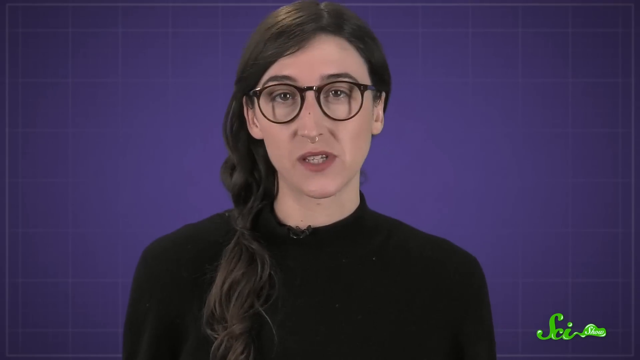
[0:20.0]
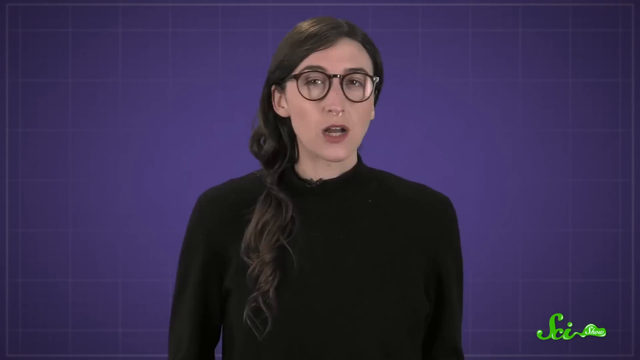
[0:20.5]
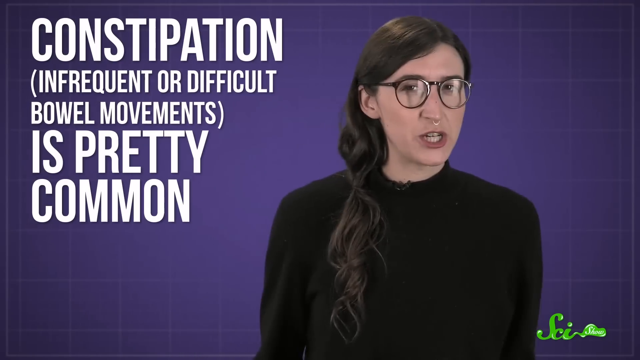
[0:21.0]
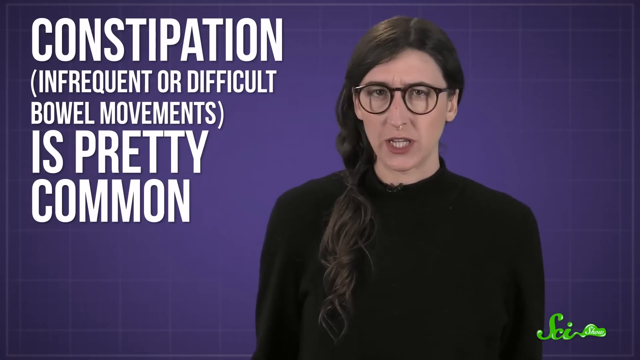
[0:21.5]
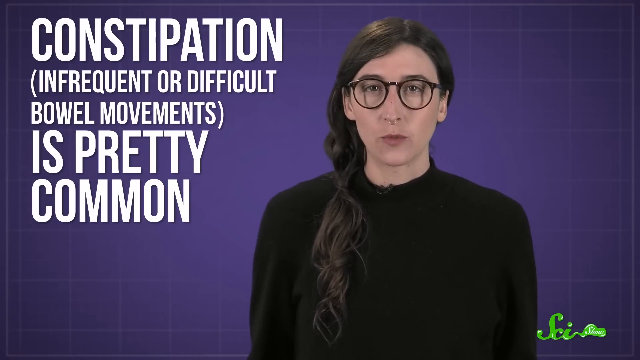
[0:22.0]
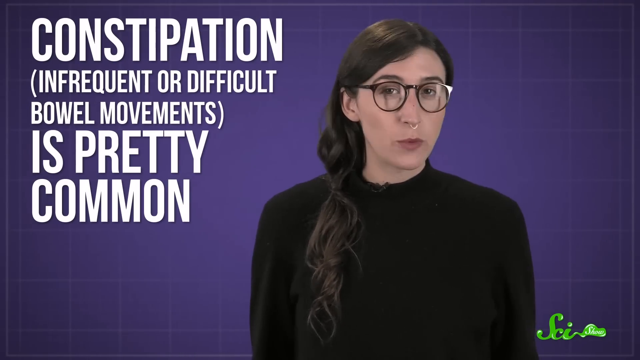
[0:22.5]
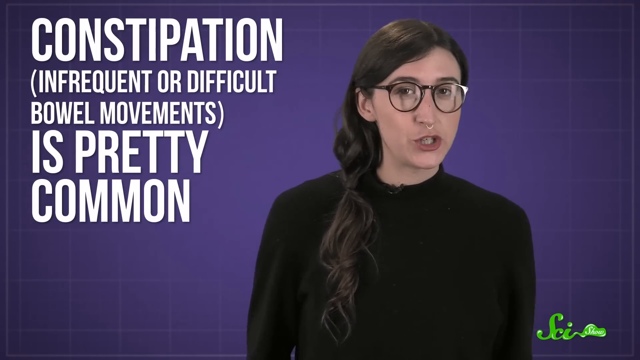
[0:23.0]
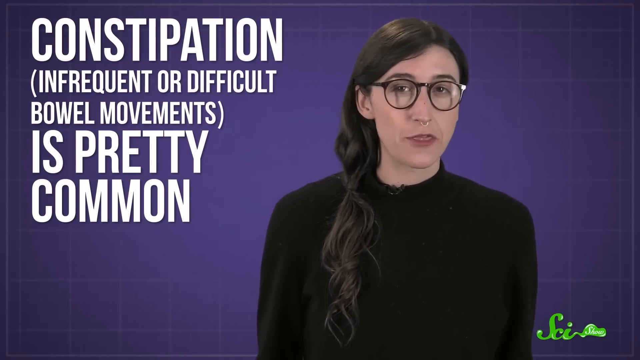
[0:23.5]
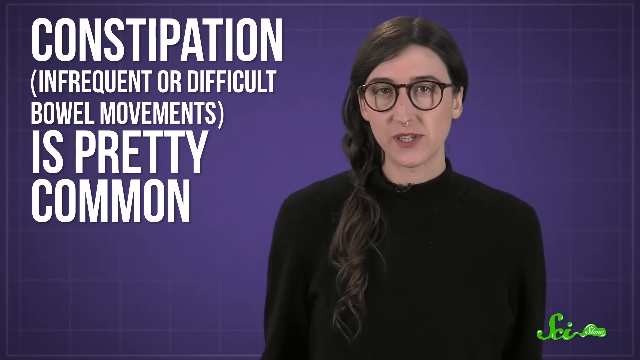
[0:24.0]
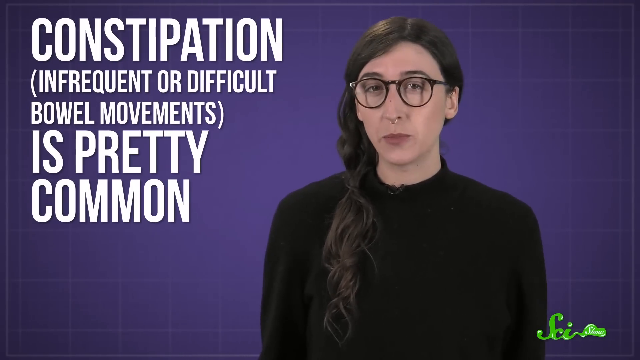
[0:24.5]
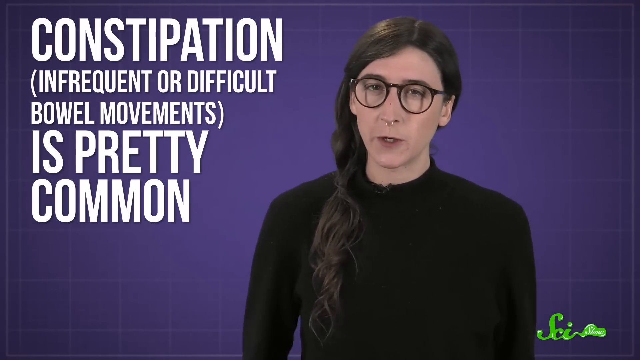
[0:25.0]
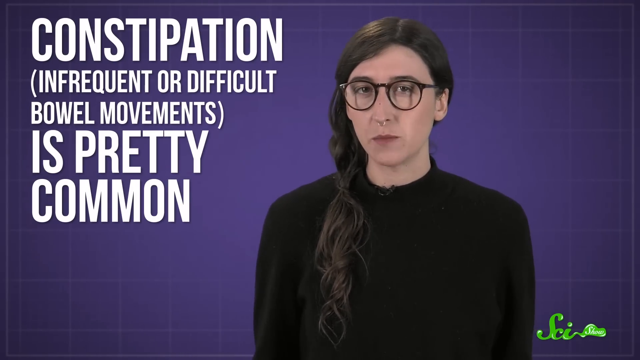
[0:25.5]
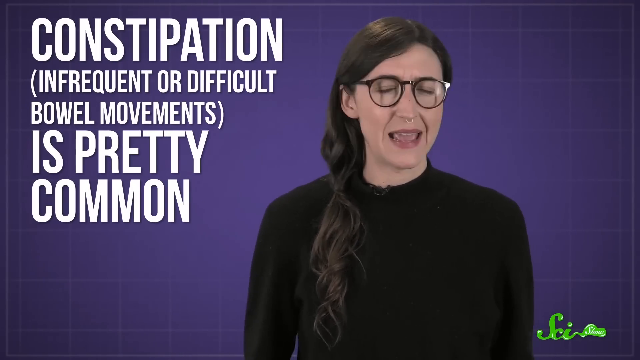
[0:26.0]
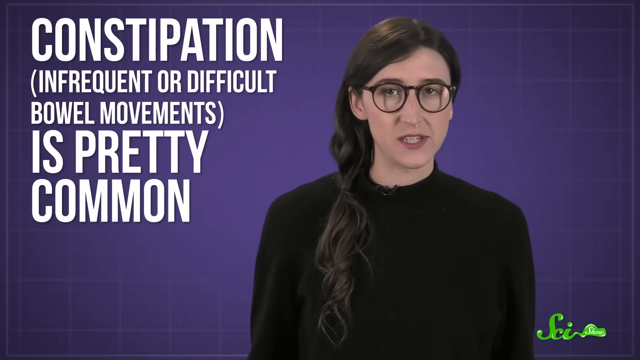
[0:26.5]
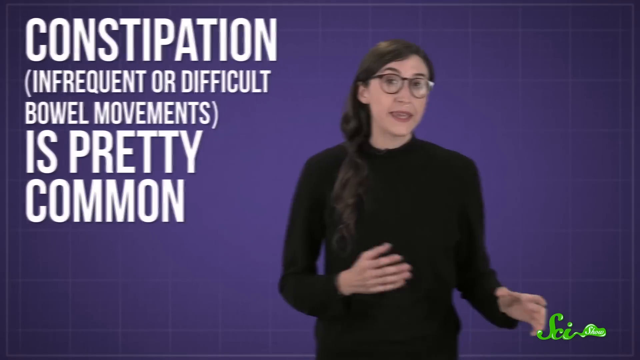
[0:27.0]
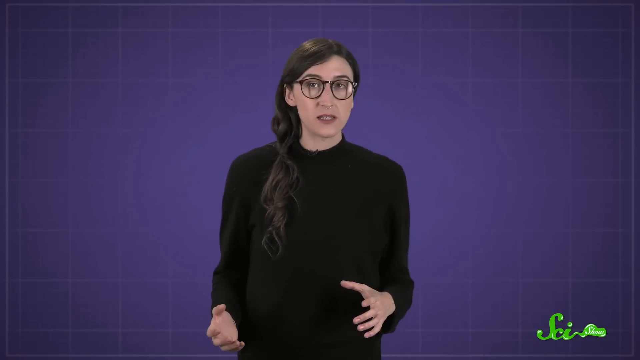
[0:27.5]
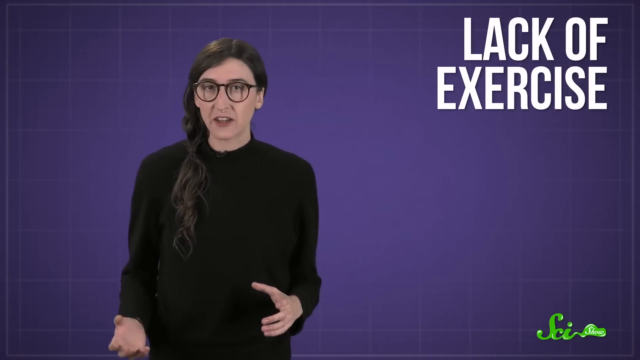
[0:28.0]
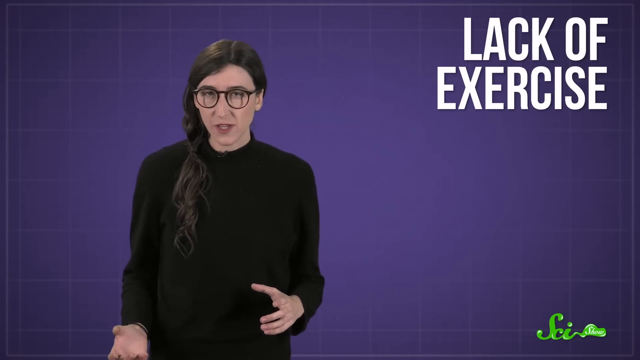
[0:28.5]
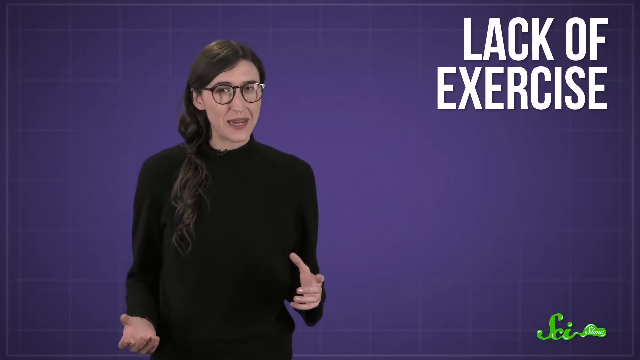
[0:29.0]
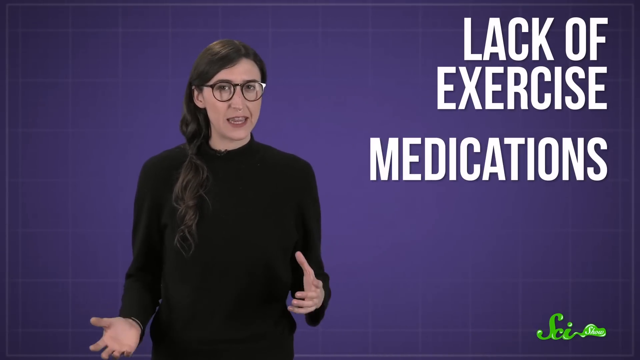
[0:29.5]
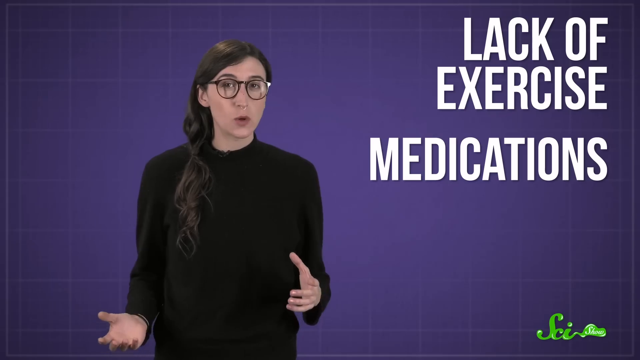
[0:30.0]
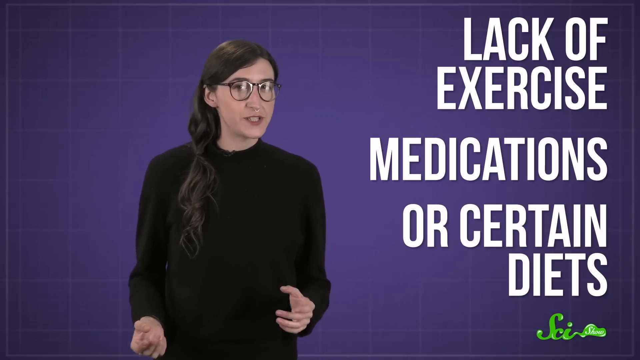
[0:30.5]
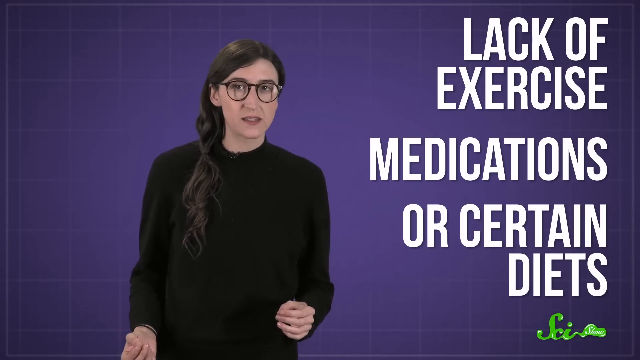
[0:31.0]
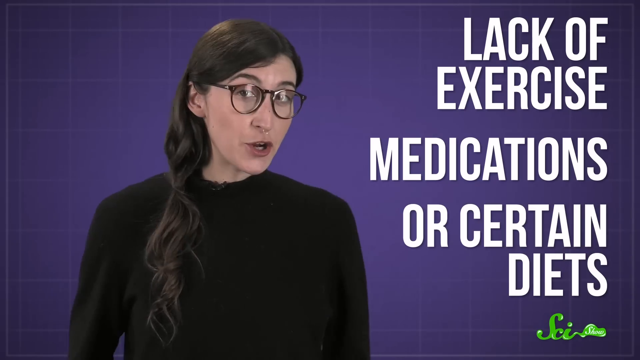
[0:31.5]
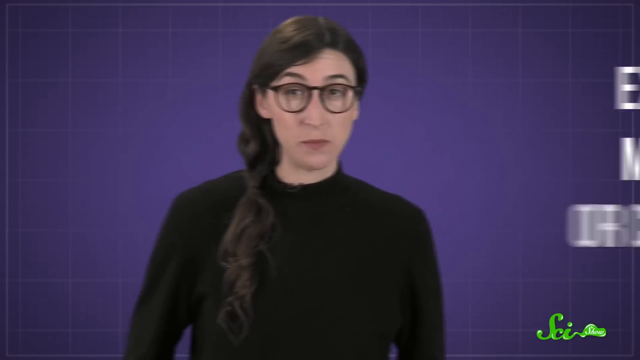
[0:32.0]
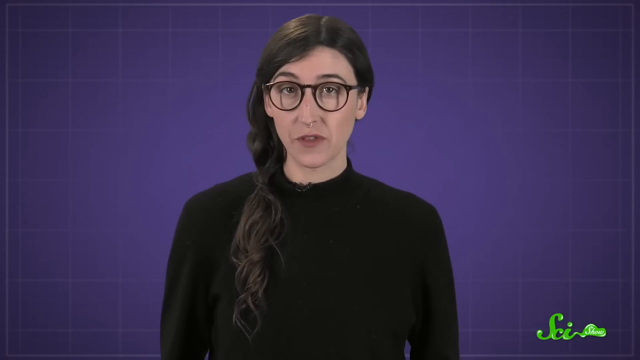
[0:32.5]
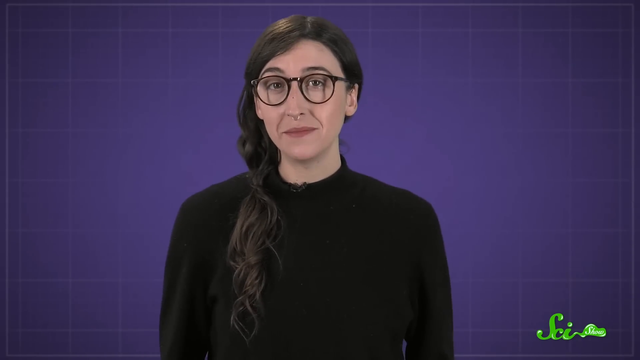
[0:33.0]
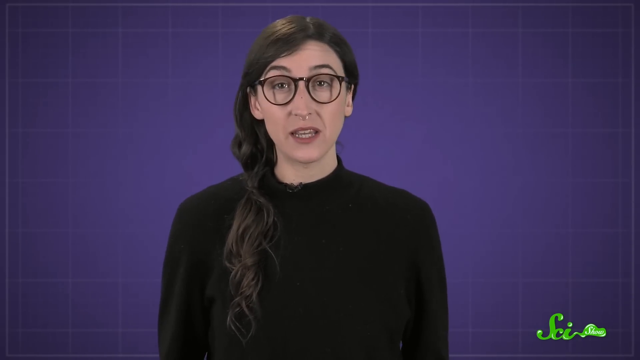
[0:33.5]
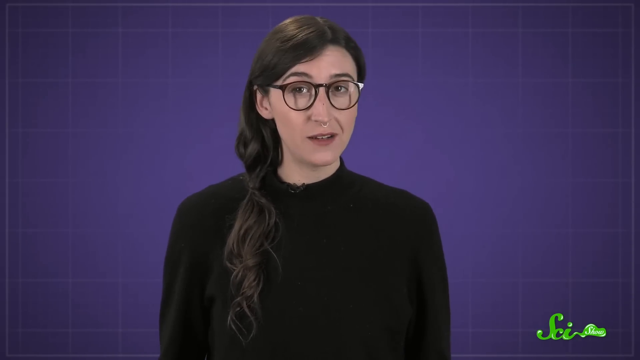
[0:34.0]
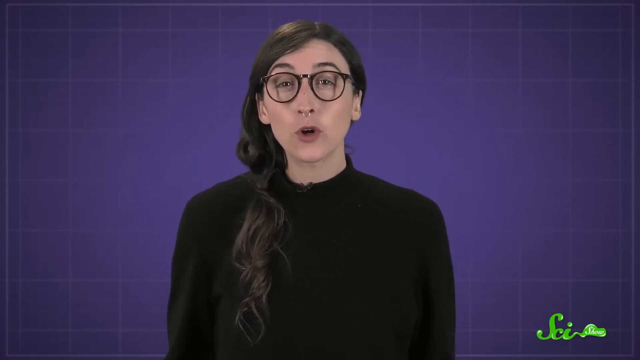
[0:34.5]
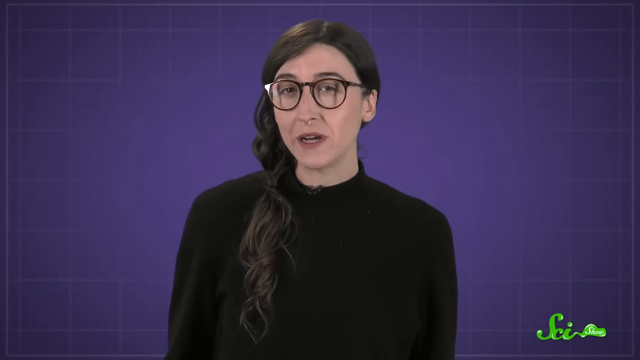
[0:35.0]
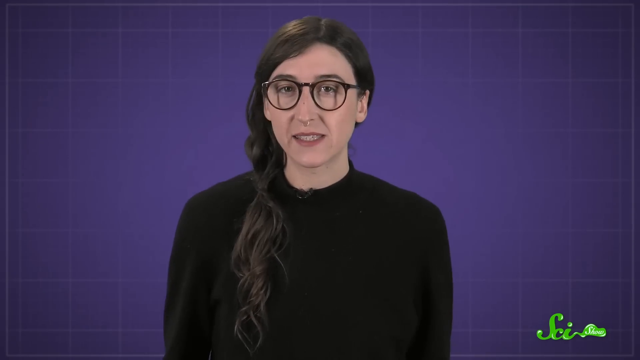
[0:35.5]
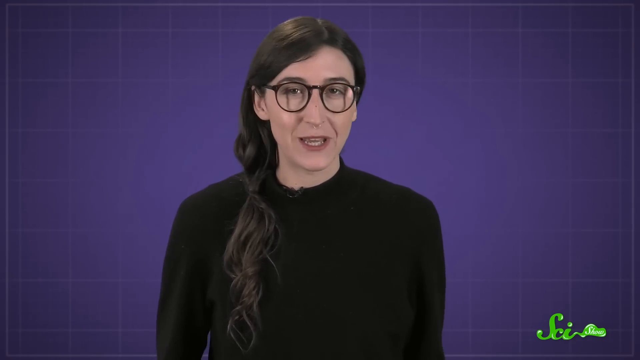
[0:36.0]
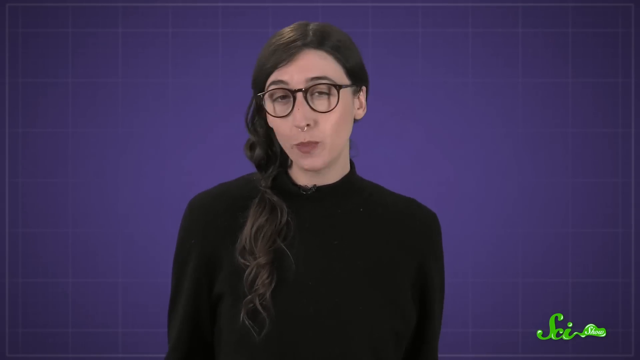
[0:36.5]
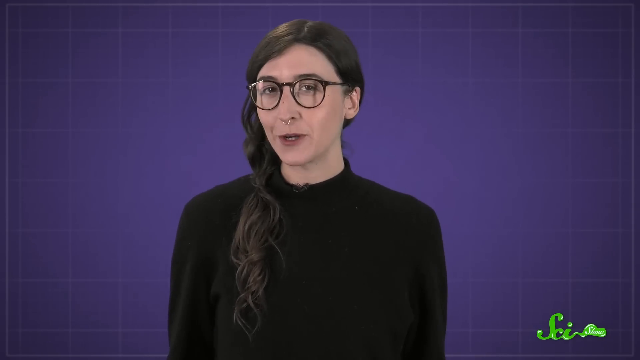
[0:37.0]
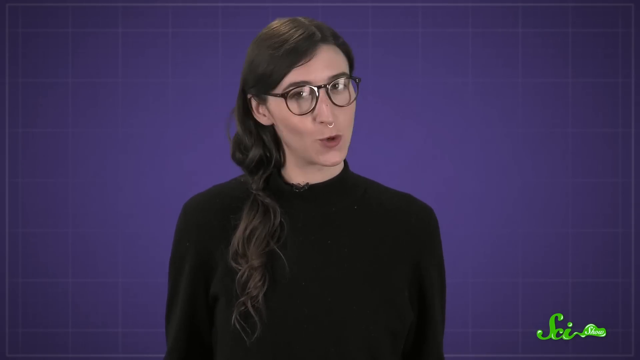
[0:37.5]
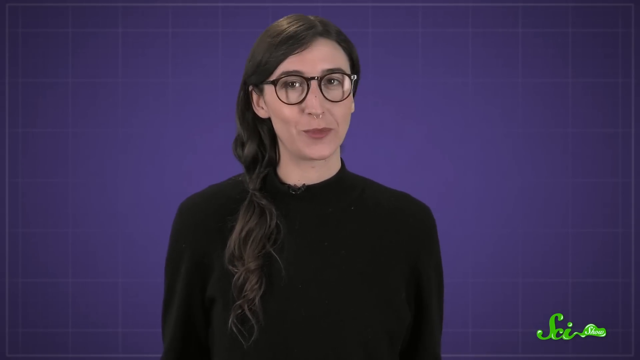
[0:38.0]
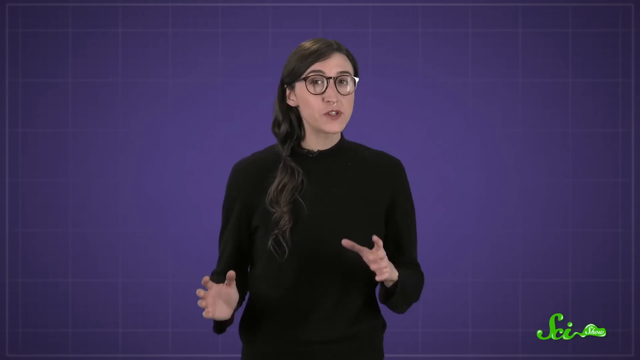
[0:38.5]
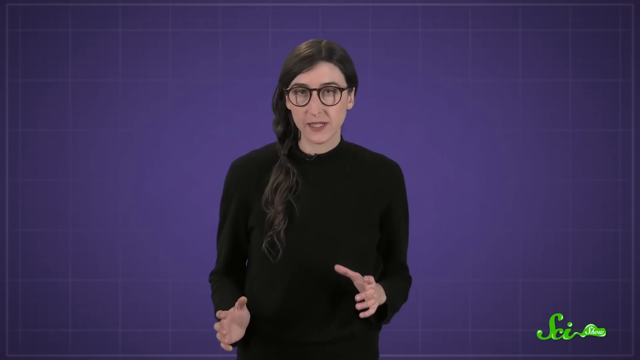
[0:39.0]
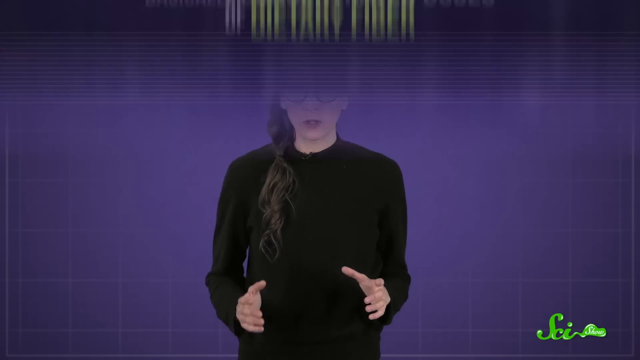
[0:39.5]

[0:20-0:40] A woman with long dark hair and brown glasses, wearing a dark turtleneck sweater, speaks to the camera while standing in front of what appears to be a purple background. On-screen text reads "constipation and frequent or difficult bowel movements is pretty common," then "lack of exercise, medications, or certain diets," and then "bulk formers."